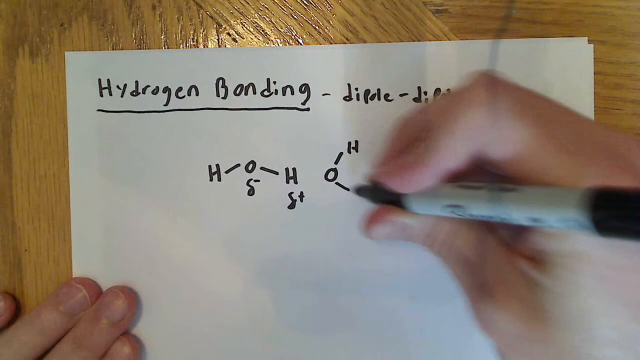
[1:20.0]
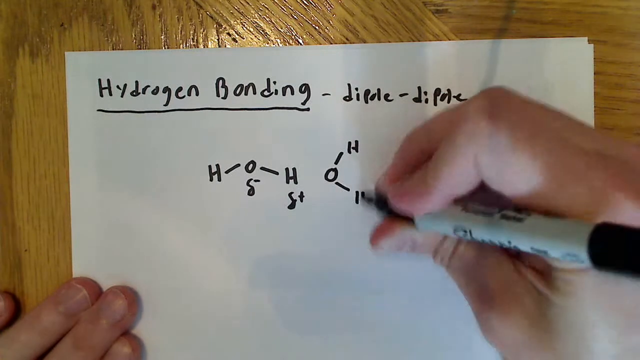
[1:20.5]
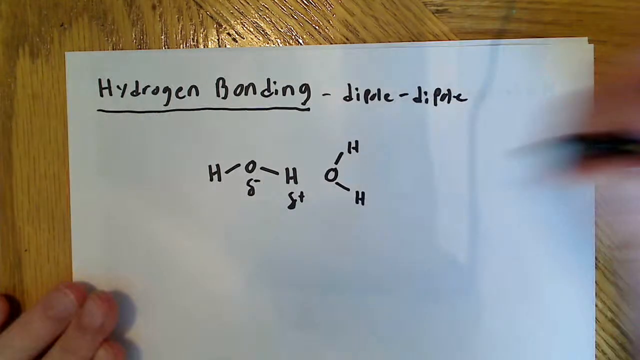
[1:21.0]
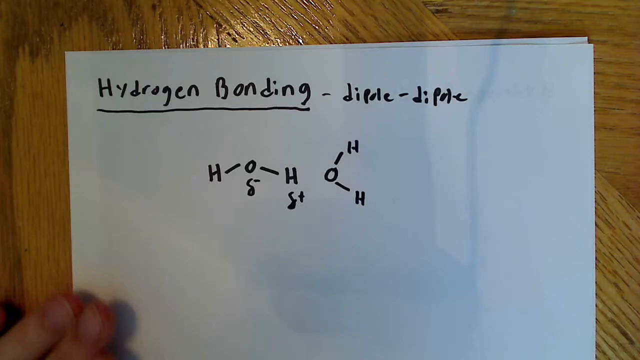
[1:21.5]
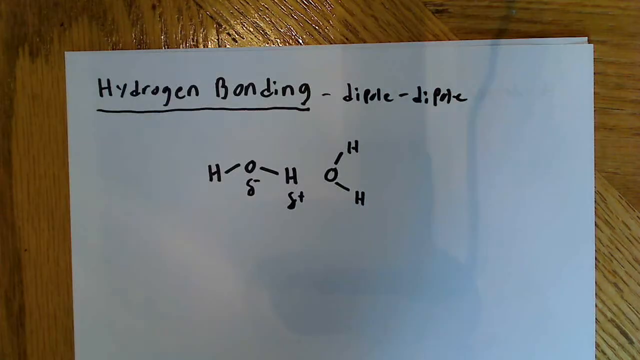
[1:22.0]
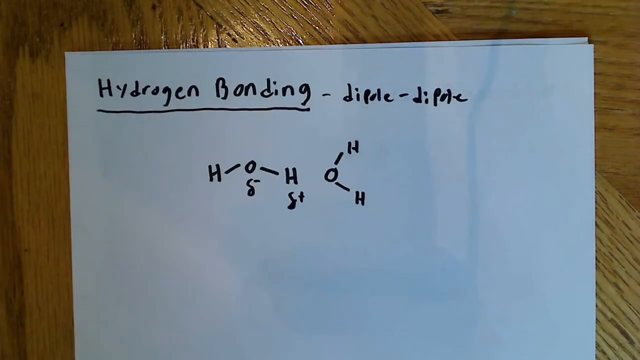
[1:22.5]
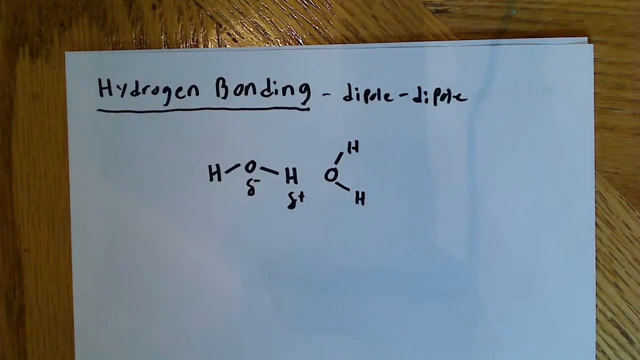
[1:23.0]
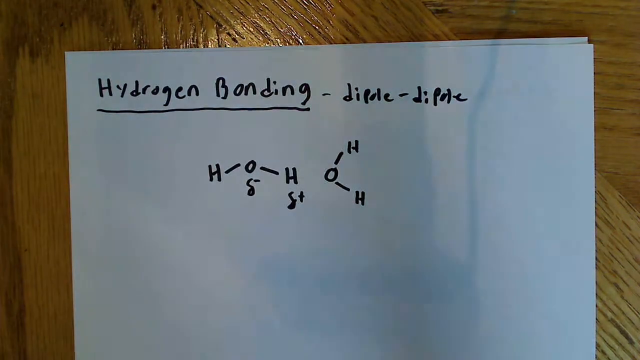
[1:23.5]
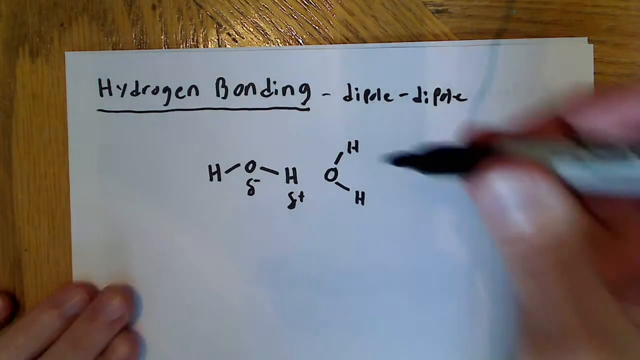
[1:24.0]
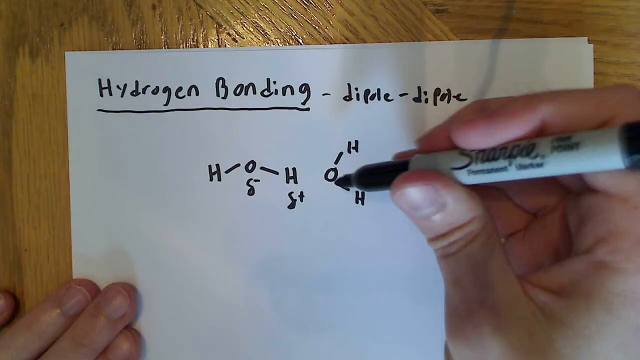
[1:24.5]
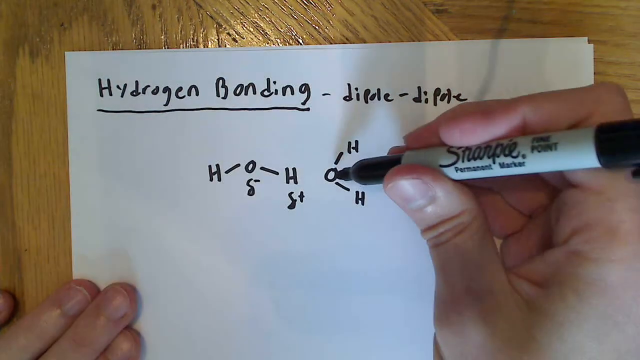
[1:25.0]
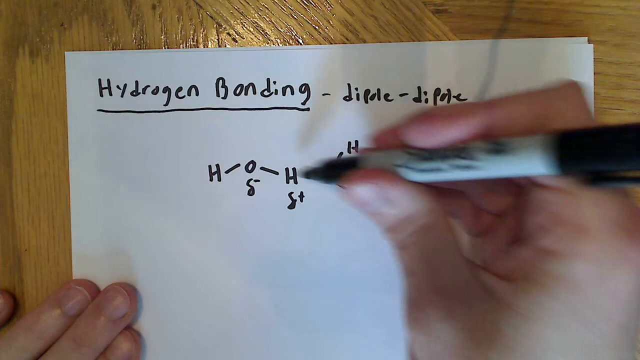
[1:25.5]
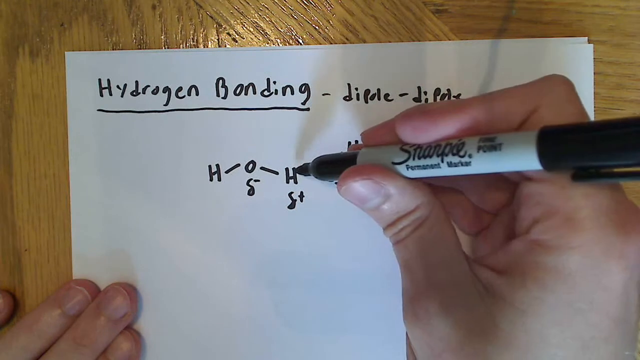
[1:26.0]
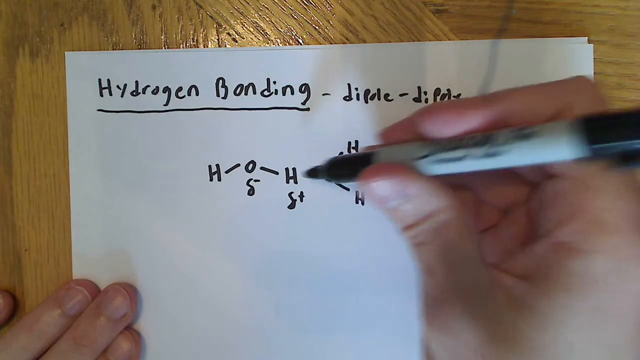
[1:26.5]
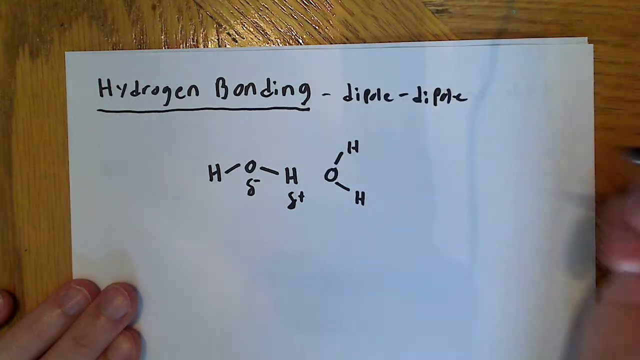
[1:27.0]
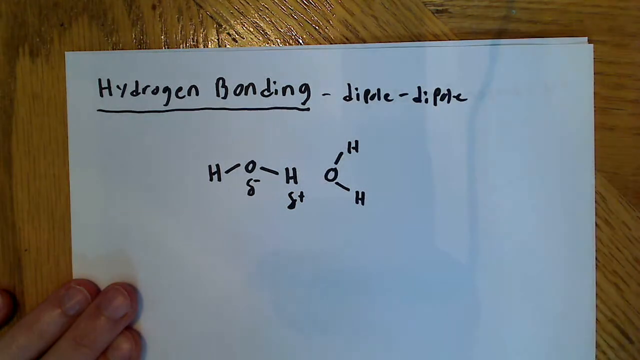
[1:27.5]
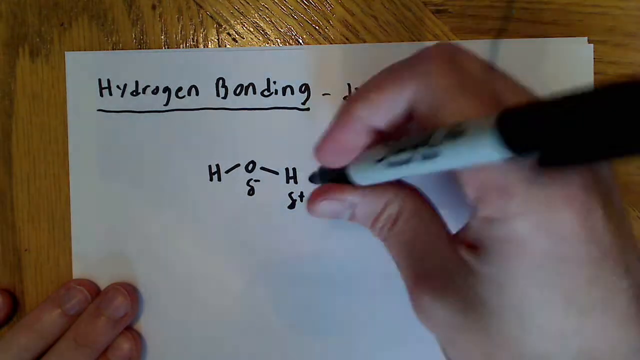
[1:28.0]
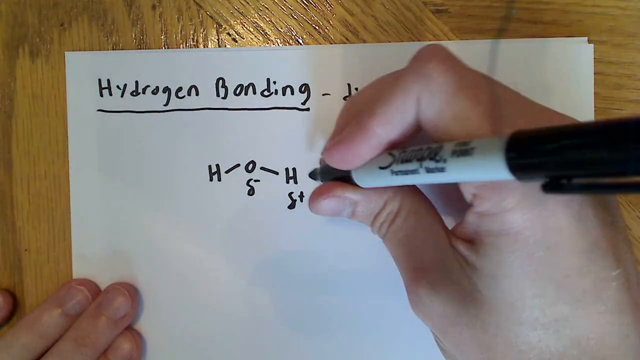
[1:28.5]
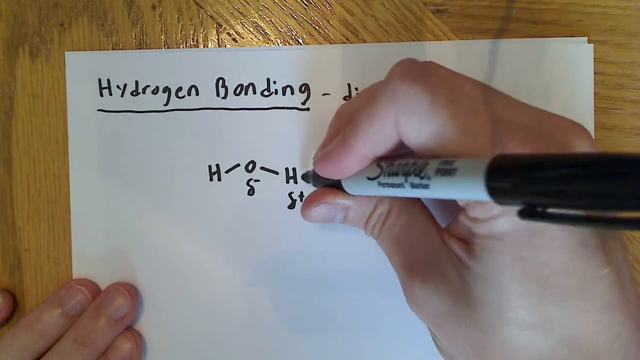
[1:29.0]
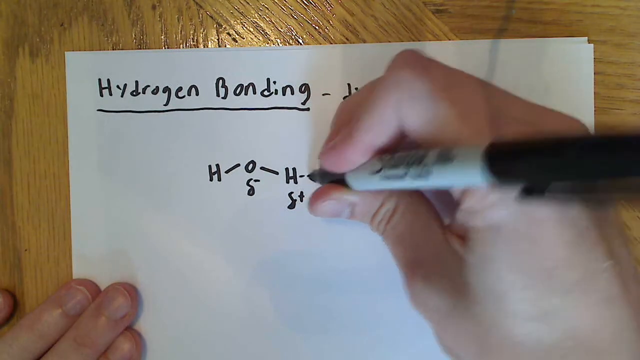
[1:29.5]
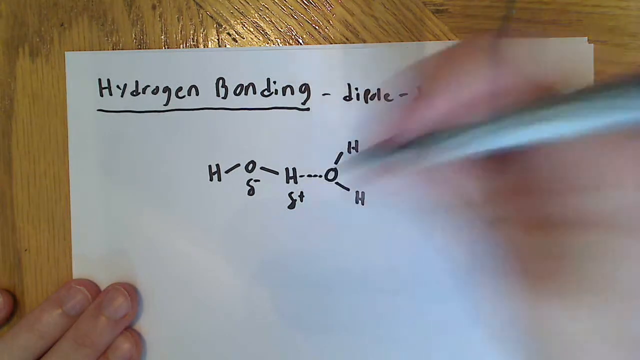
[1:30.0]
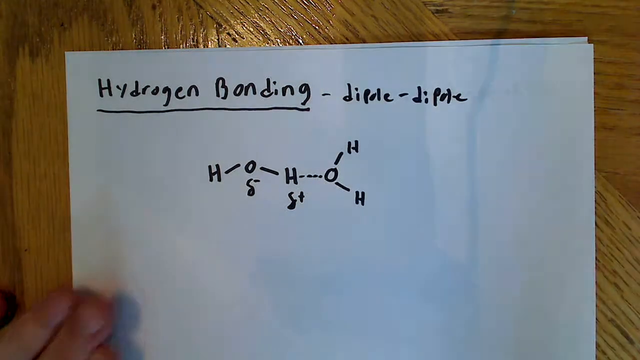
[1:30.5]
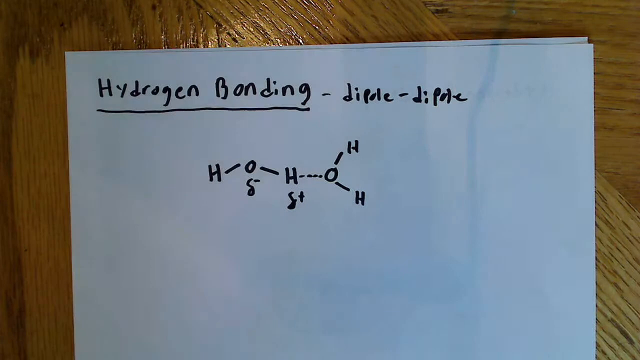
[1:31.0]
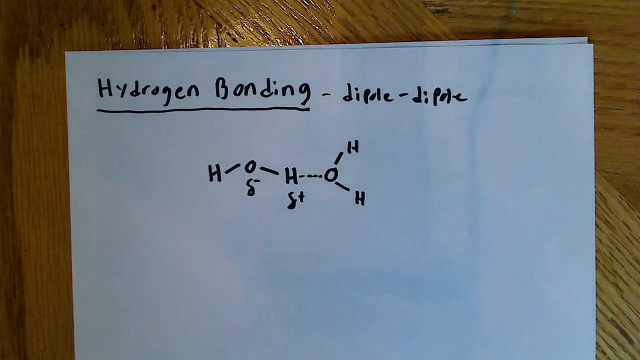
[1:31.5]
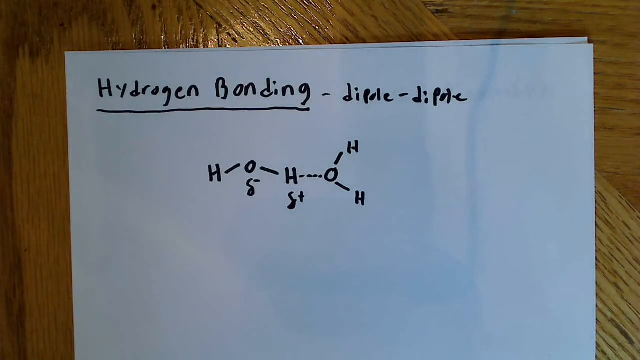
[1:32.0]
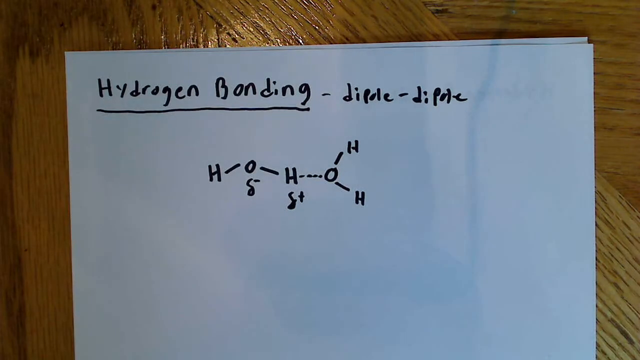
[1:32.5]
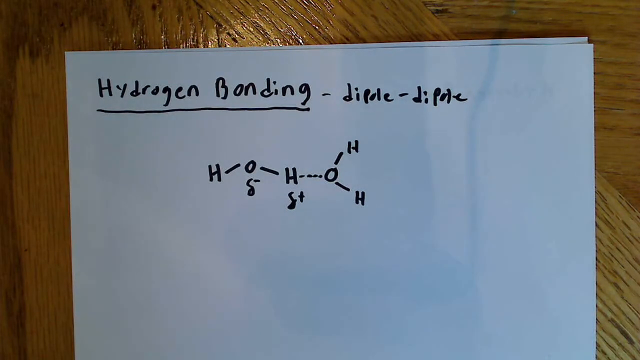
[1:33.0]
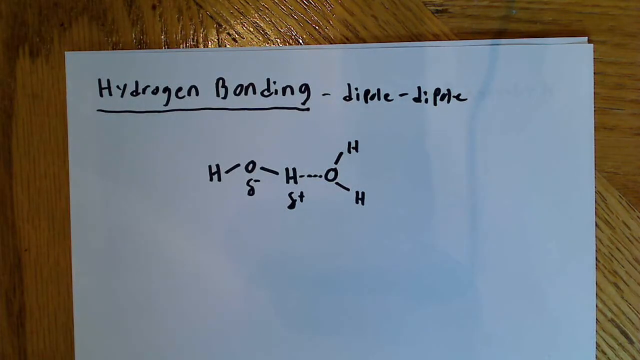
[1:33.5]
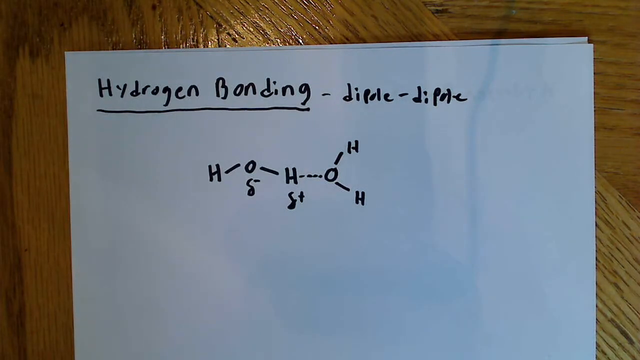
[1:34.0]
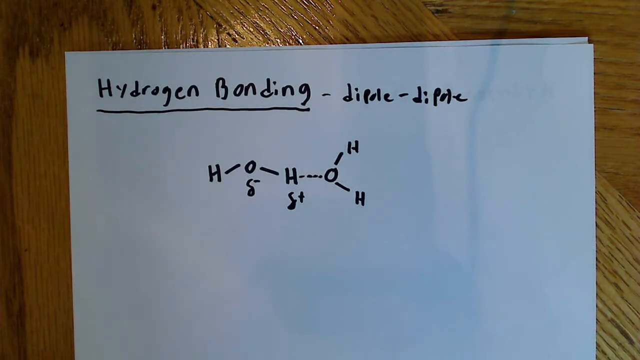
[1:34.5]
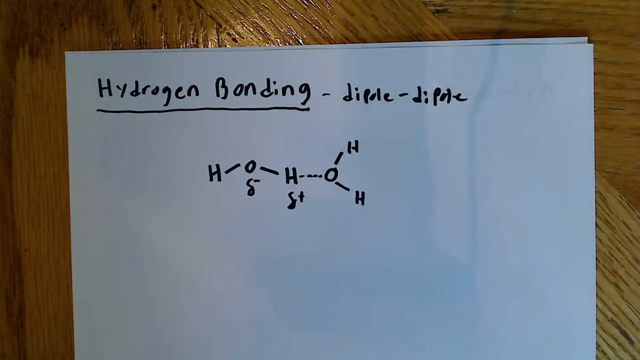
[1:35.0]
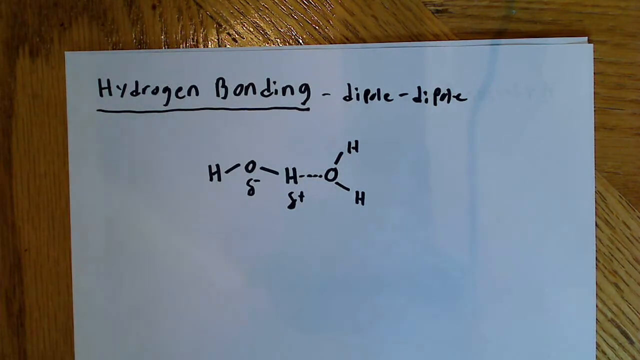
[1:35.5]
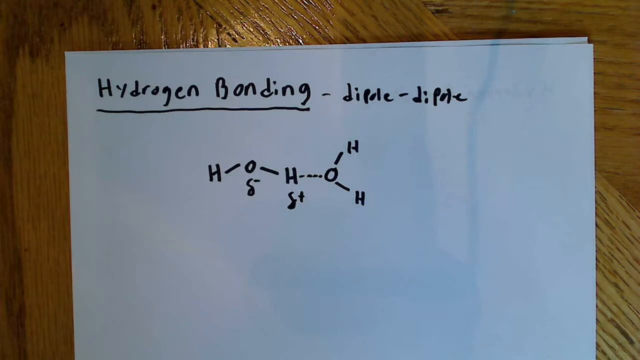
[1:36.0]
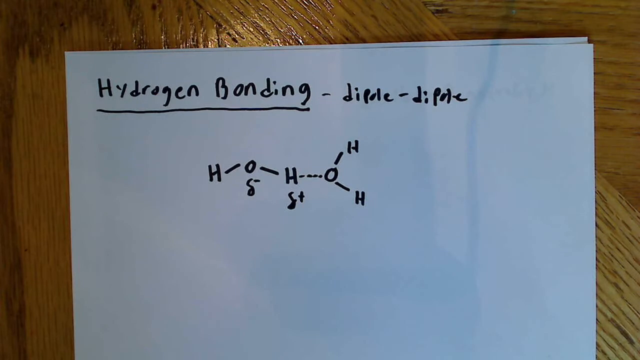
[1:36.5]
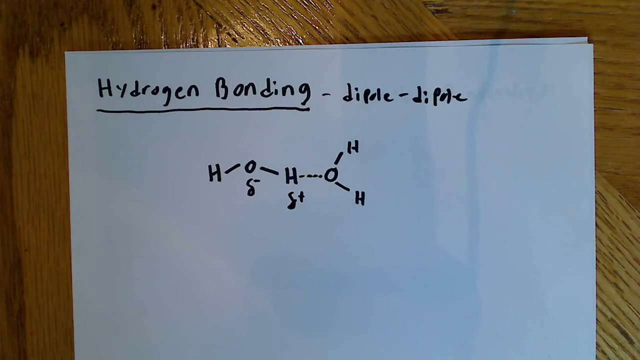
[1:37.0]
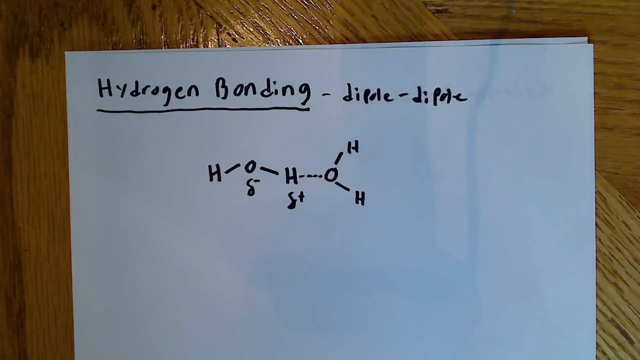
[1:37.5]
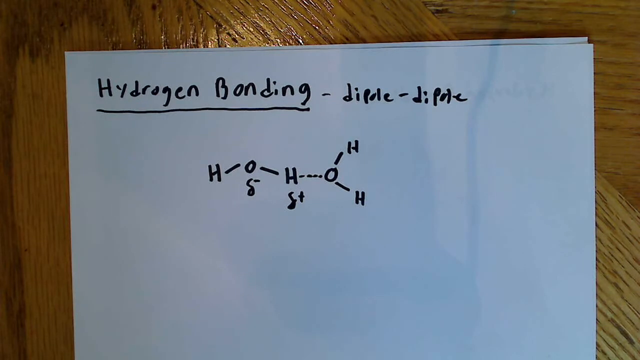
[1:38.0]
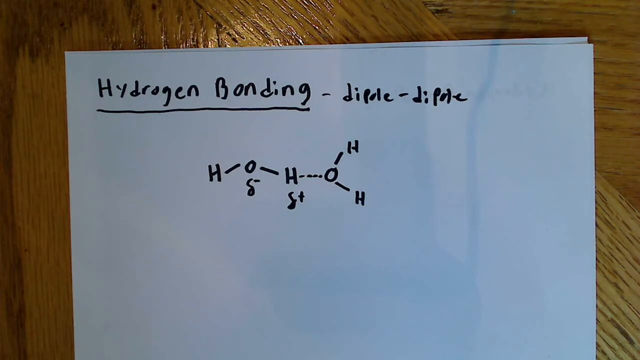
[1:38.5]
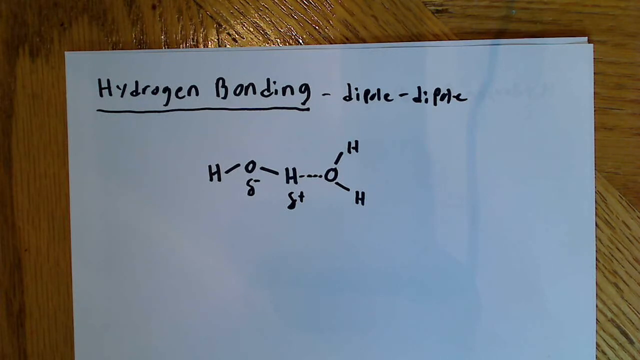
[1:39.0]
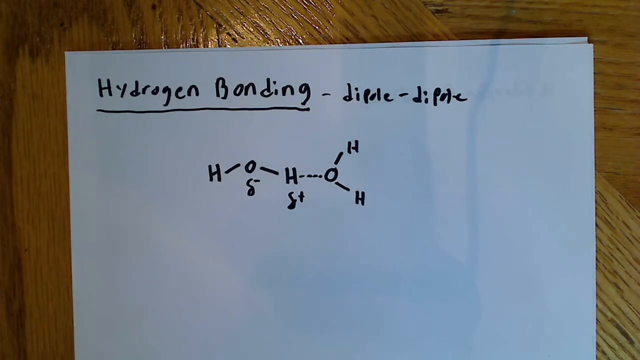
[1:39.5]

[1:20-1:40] White printer paper lies on a brown wooden table. In the top left corner of the top sheet, "hydrogen bonding" is written in Sharpie with the h and b capitalized and the rest lowercase, underlined, followed by a dash, the word "dipole" in lowercase, another dash, and "dipole" again. Beneath "bonding" is a diagram of a capital H with a slight dash going up and to the right to a capital O, and a slight dash going down to the right to a capital H. Beneath the O is what looks like a Greek lowercase delta with a minus sign, and beneath the right H a Greek lowercase delta with a plus sign. To the right is a second diagram: a capital O with a dash going up and to the right to an H, and another dash going down to the right. Two hands of a white person with short fingernails are in the frame; the left hand holds down the paper and the right hand holds a Sharpie and continues working on the right diagram. It draws an H at the bottom of the dash going down to the right, hovers the Sharpie over various letters, and then draws a dashed line between the last H of the first diagram and the O of the second. The hands leave the frame, and shadows move across the surface of the paper.